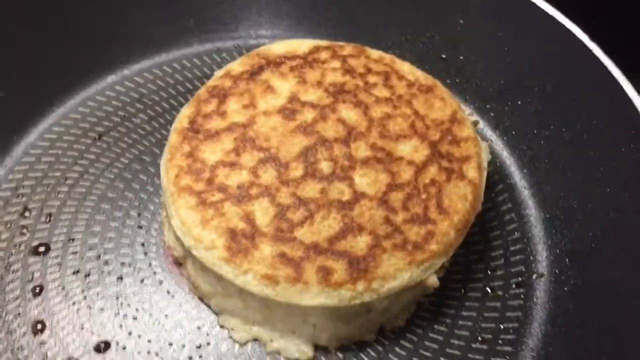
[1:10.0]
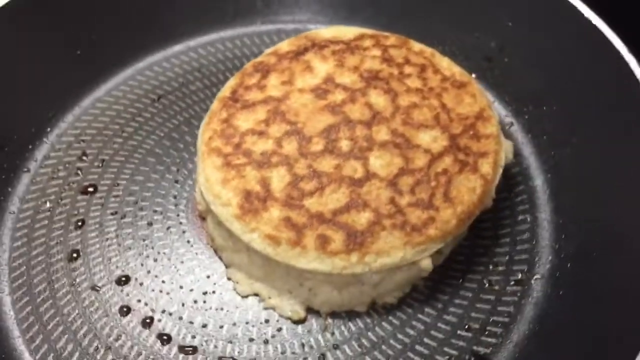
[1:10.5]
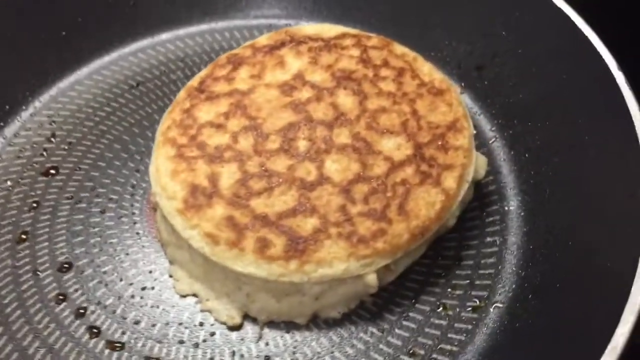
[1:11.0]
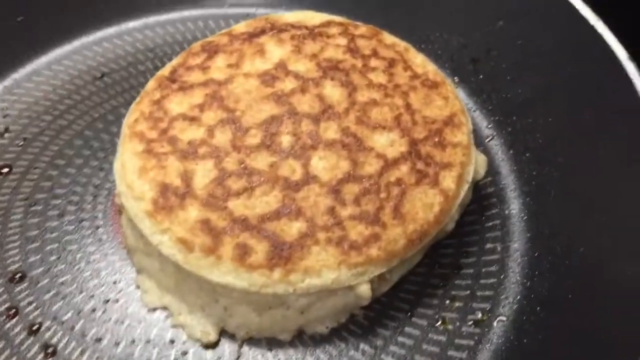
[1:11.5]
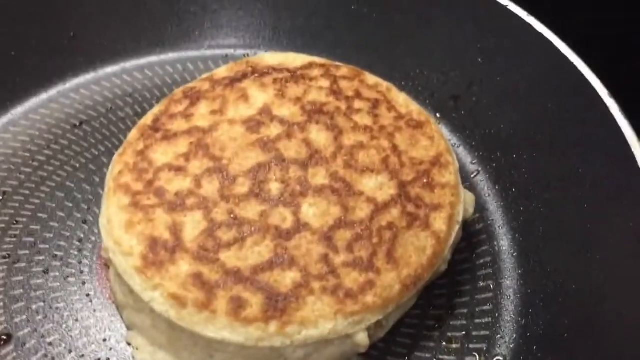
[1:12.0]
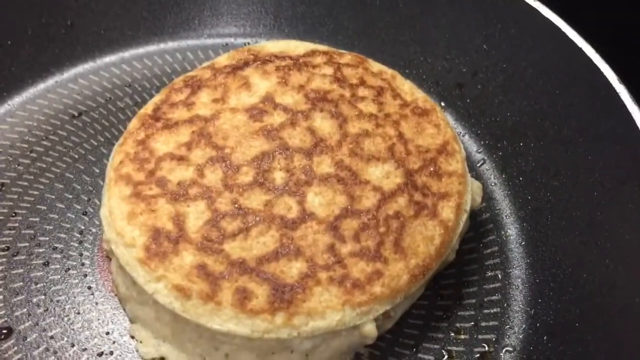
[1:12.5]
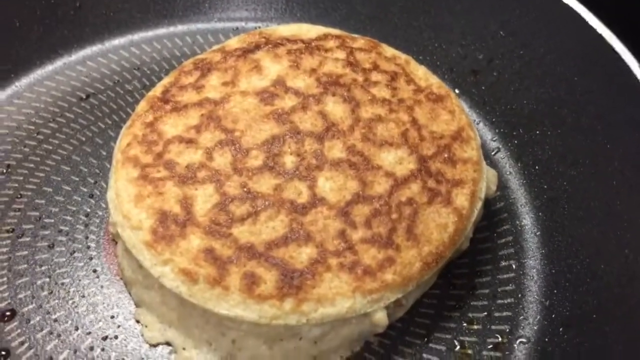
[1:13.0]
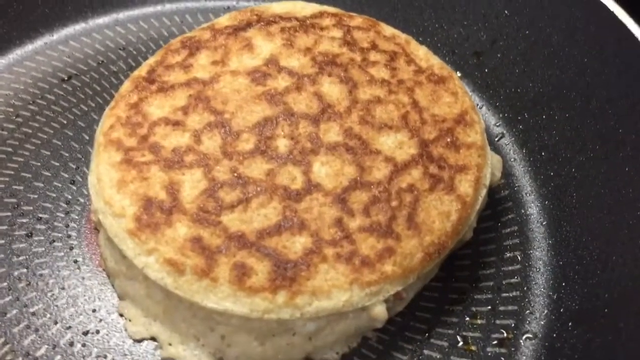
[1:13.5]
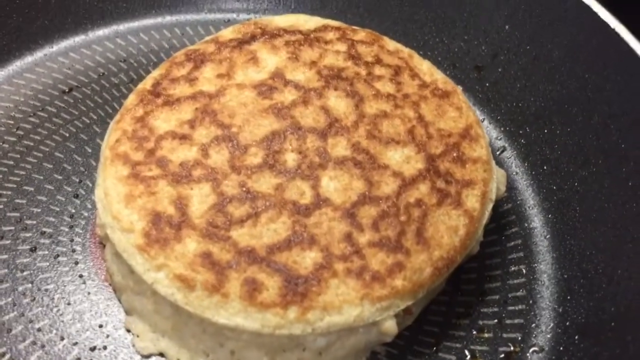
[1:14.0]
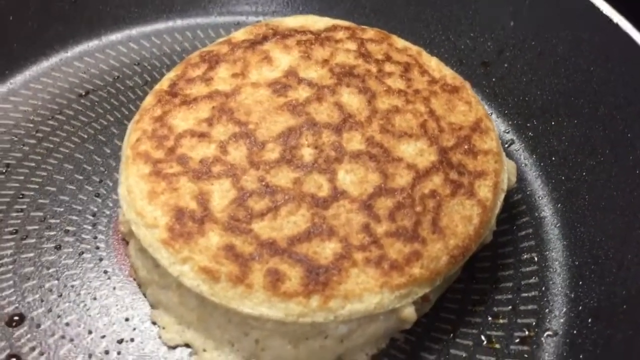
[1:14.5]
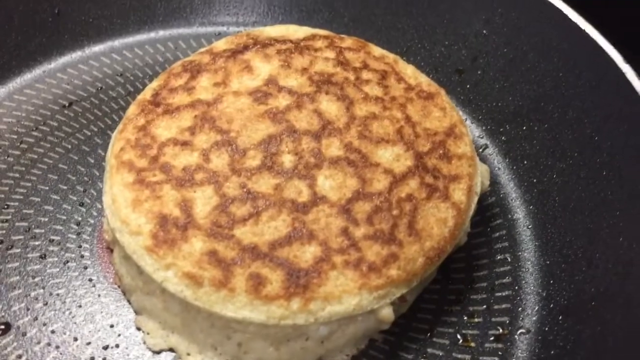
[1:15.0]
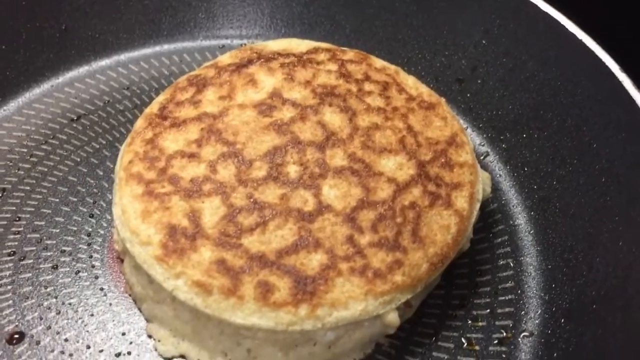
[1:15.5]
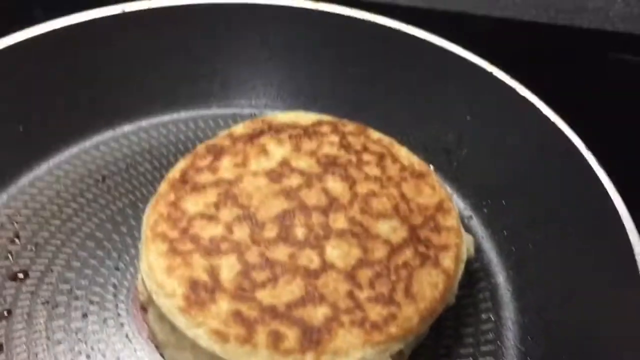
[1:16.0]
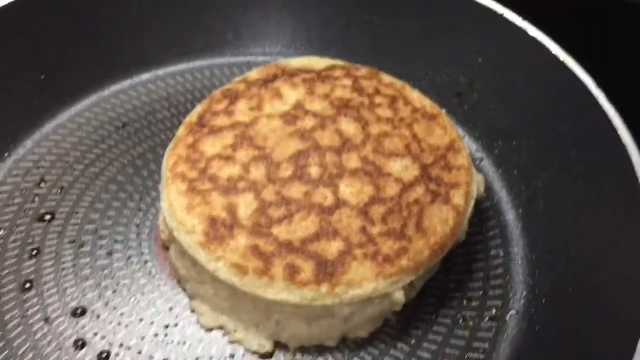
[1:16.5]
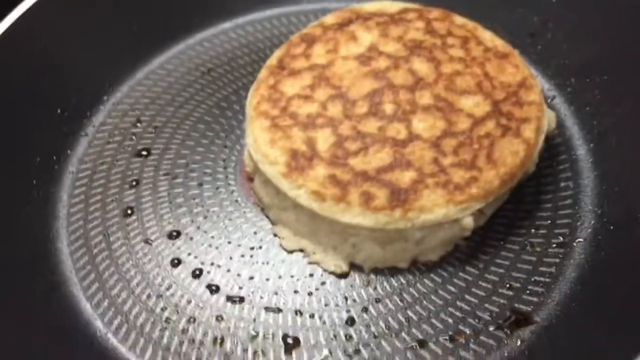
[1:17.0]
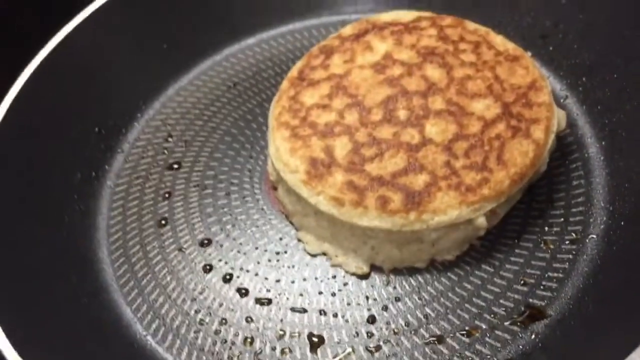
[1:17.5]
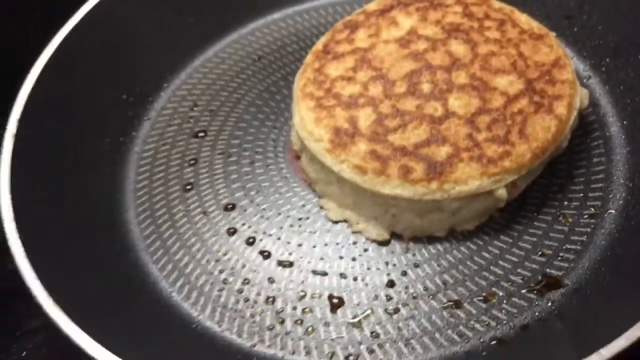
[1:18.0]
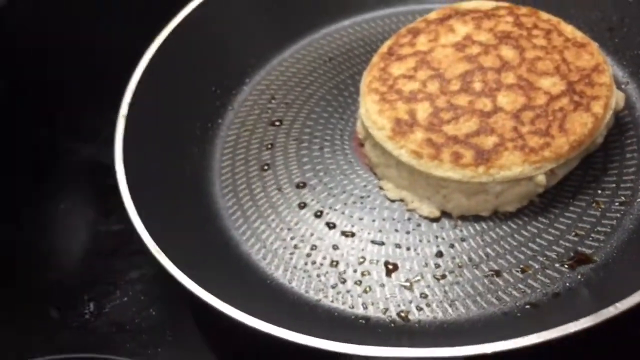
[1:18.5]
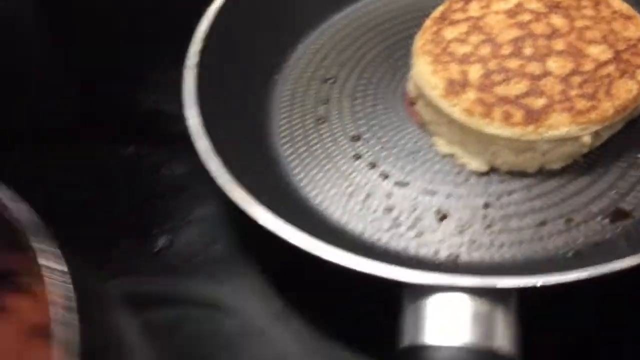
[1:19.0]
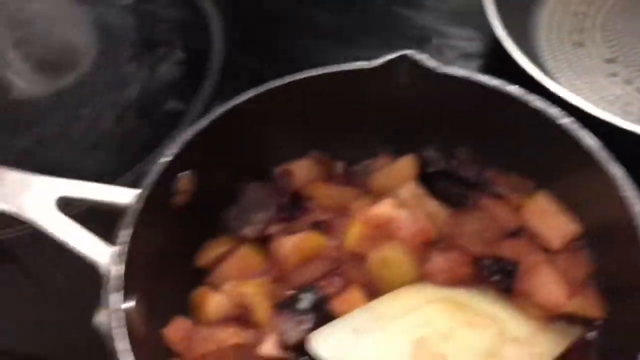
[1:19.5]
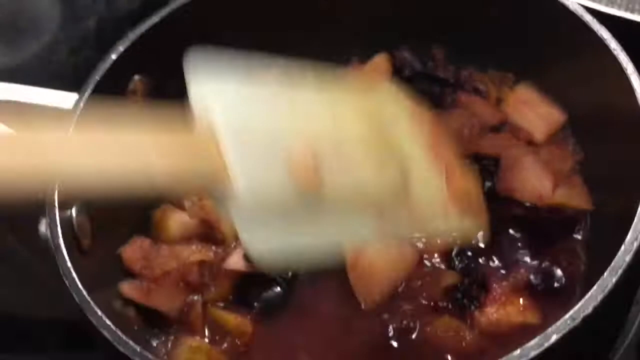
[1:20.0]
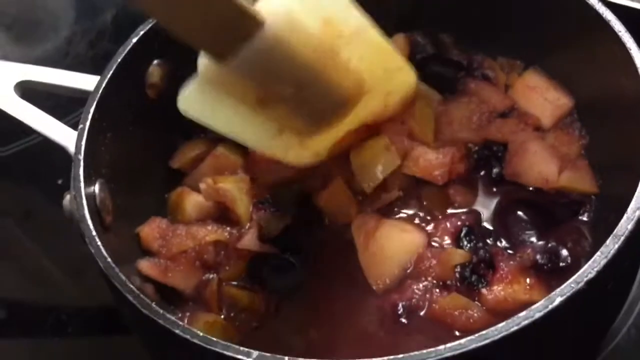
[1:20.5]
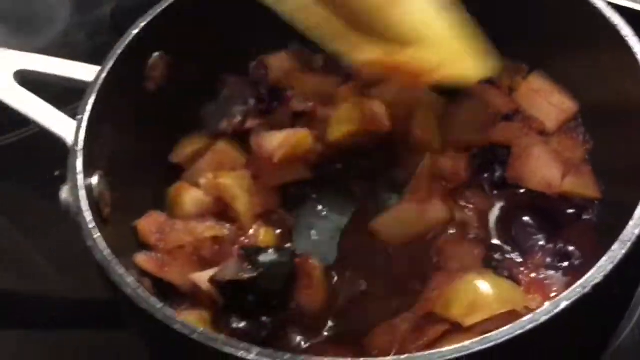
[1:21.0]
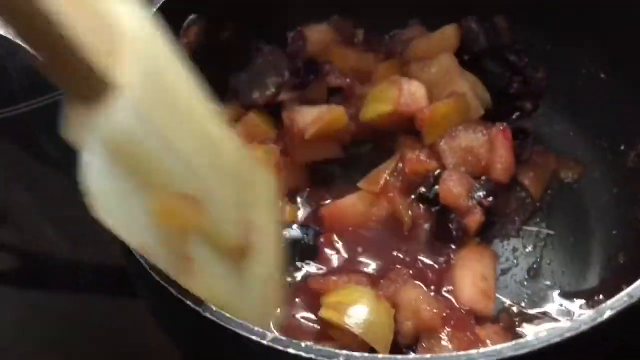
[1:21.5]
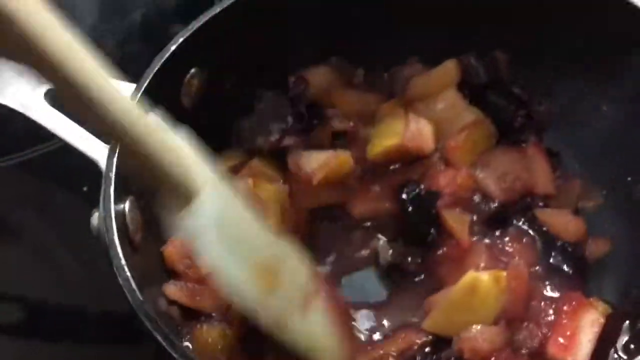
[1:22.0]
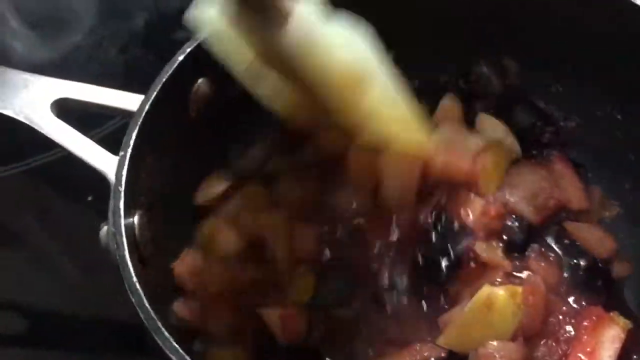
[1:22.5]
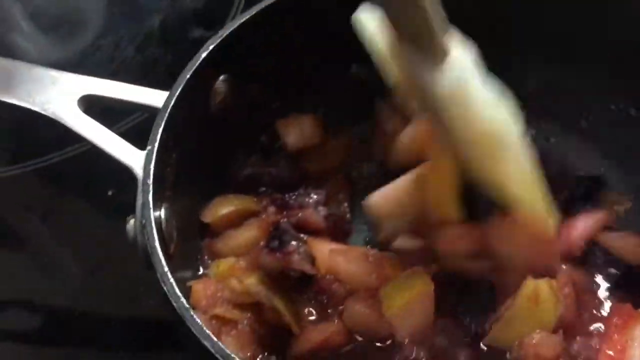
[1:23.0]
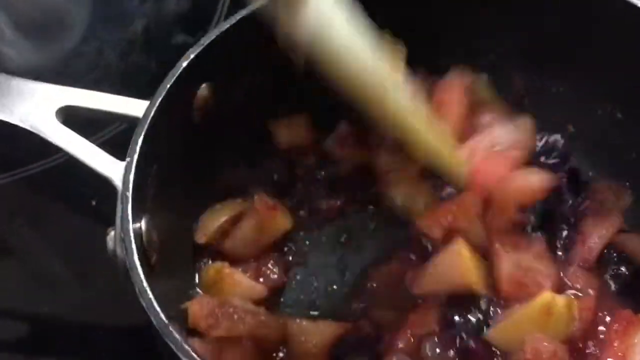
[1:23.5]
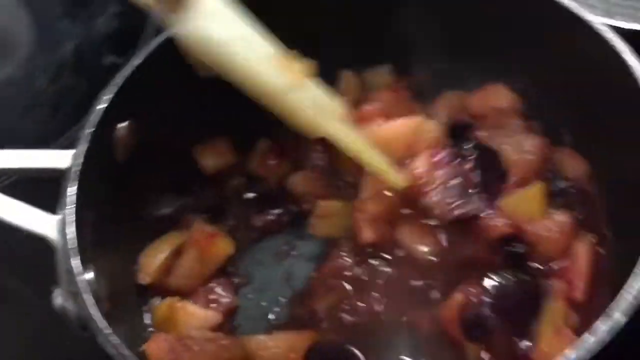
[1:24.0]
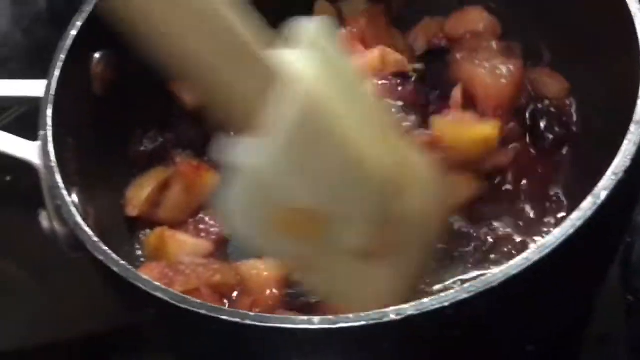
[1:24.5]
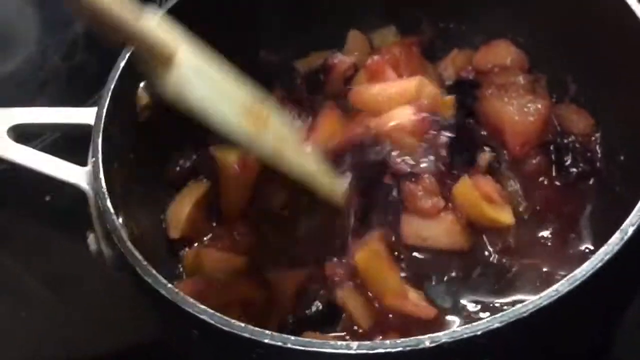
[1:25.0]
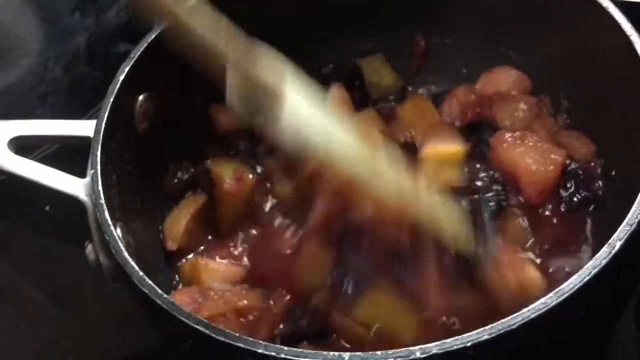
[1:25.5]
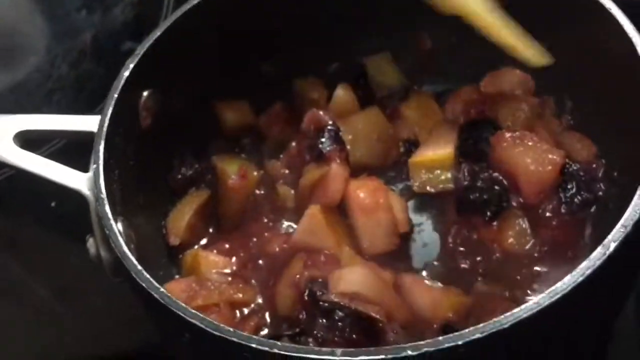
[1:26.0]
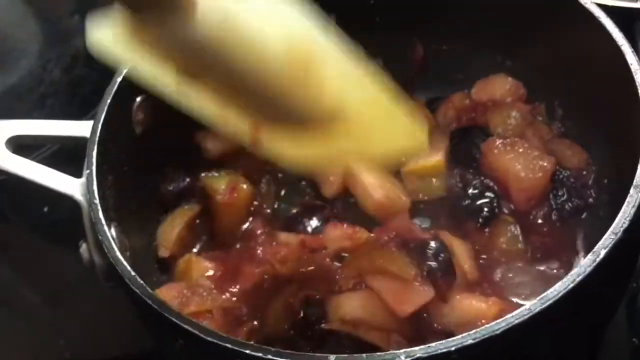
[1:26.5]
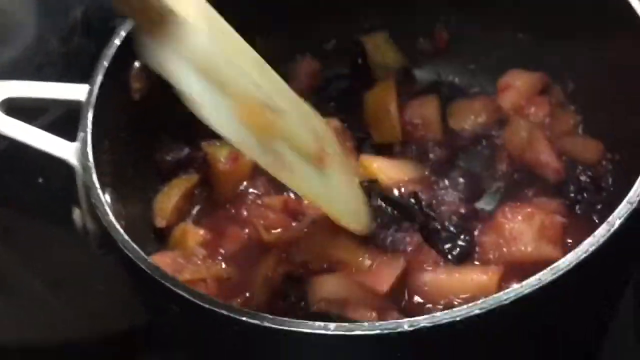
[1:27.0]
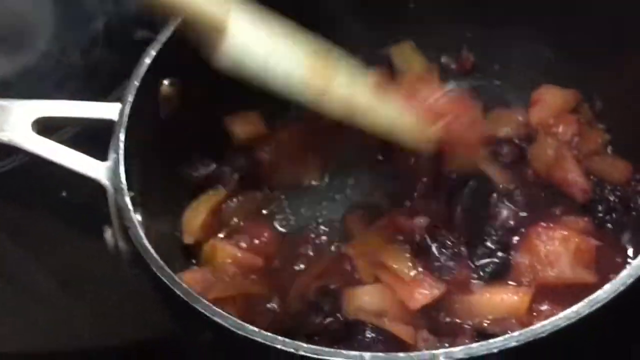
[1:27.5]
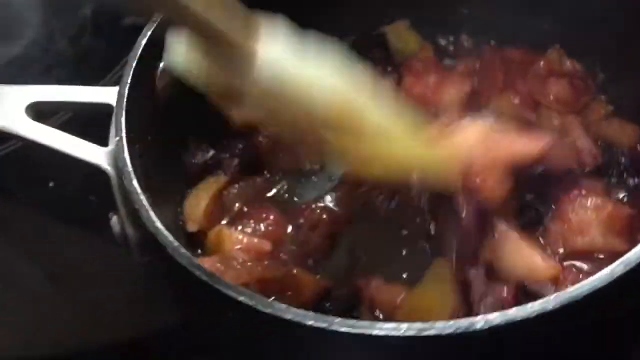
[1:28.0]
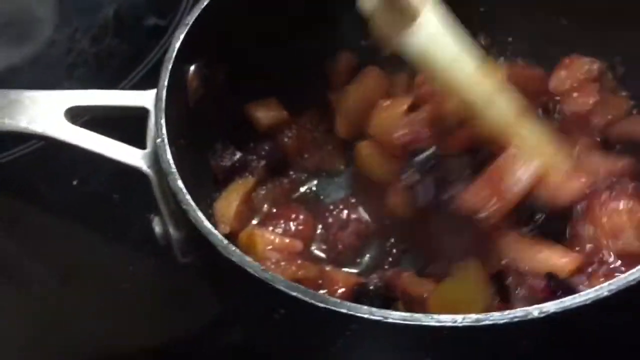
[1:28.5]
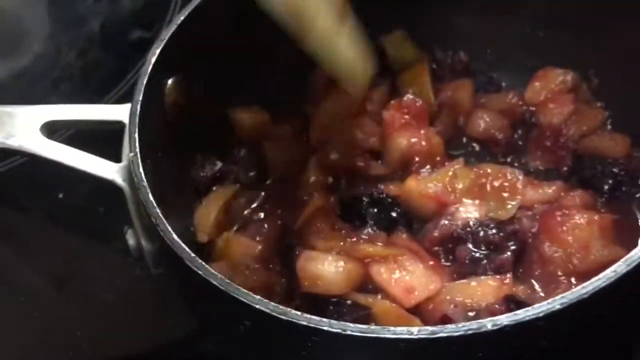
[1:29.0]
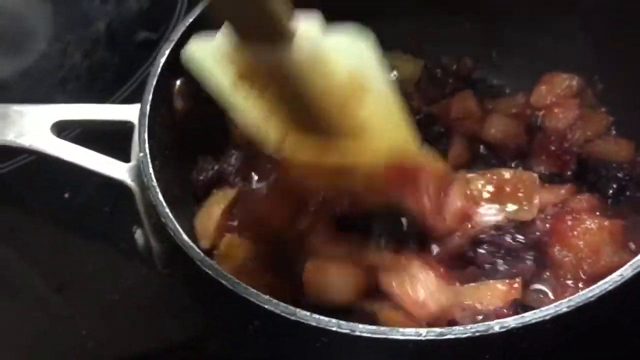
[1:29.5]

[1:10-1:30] A large round pancake is inside the black round pan, which has small skinny white dashed lines all over the bottom. The pancake is yellow with darker brown markings on the surface from cooking. The camera zooms in a bit closer to the top of the pancake. There are a few water or oil droplets on the pan; otherwise it looks pretty clean. The camera then moves to the left, where a black pot looks like it holds cut-up fruit kind of caramelizing. It looks like some kind of yellow chopped fruit, and maybe some blueberries, peaches and strawberries, in a little bit of sauce. The person mixes the mixture with a white spatula.